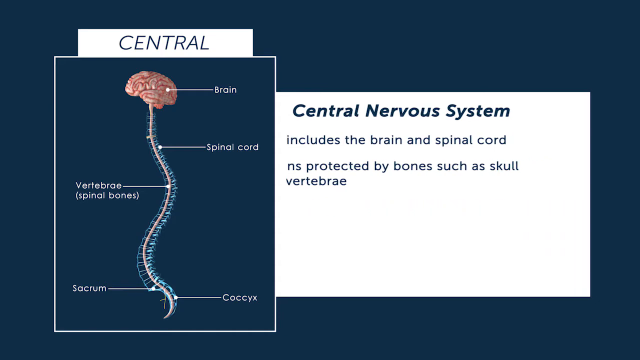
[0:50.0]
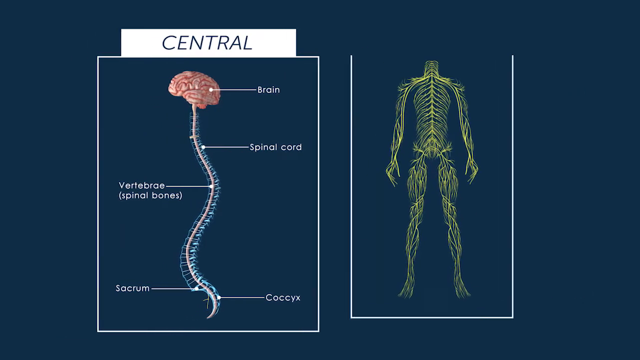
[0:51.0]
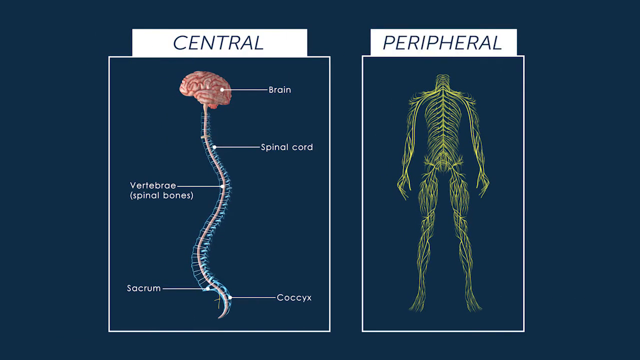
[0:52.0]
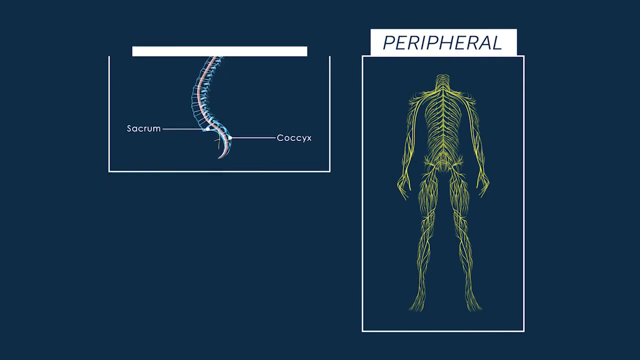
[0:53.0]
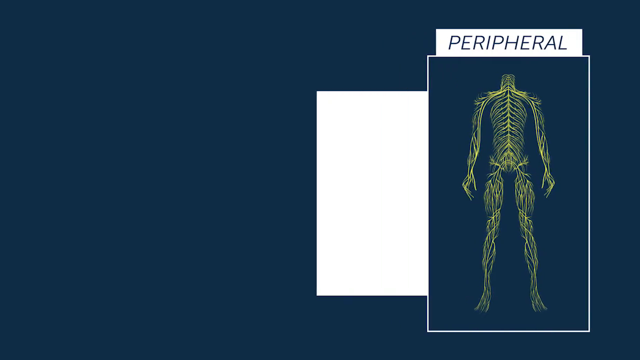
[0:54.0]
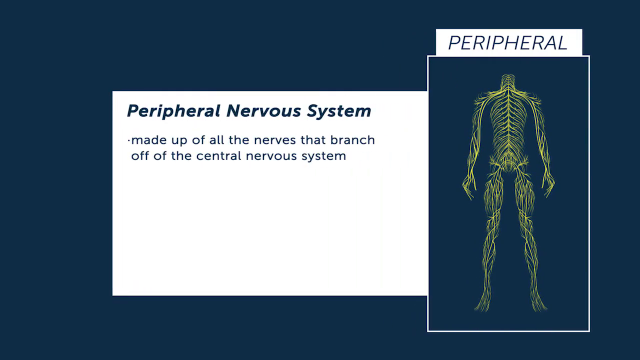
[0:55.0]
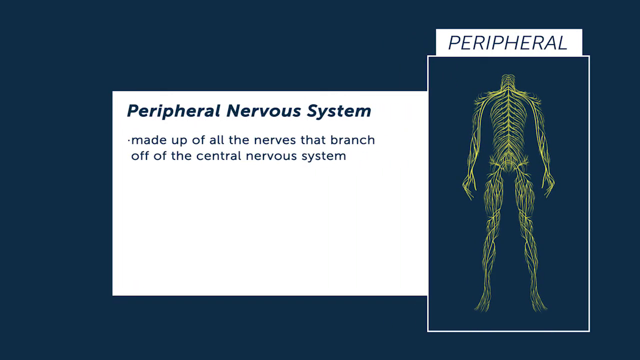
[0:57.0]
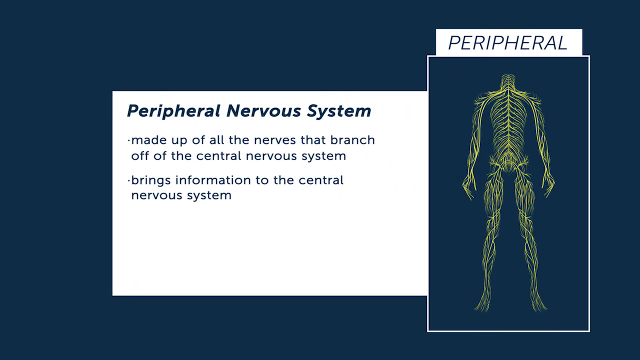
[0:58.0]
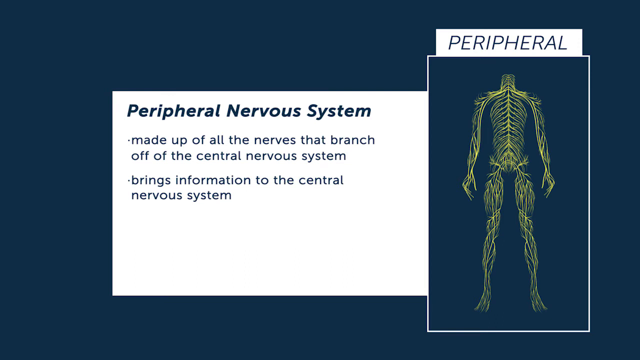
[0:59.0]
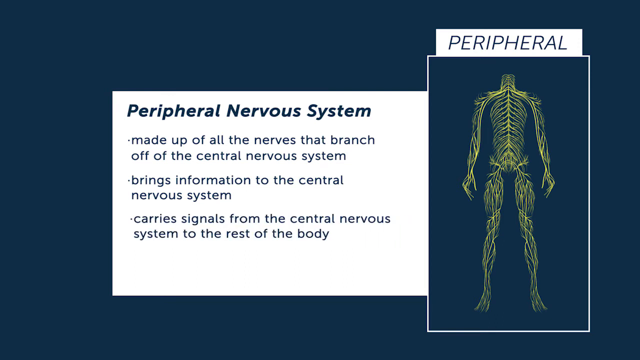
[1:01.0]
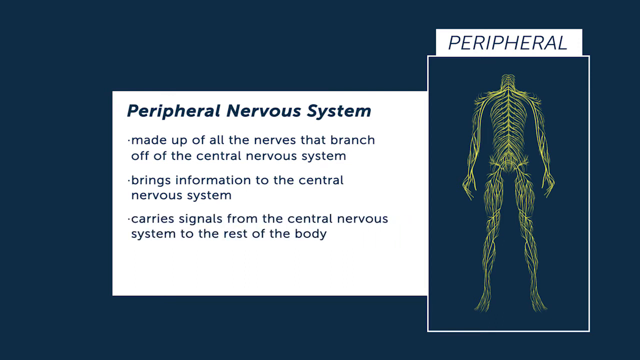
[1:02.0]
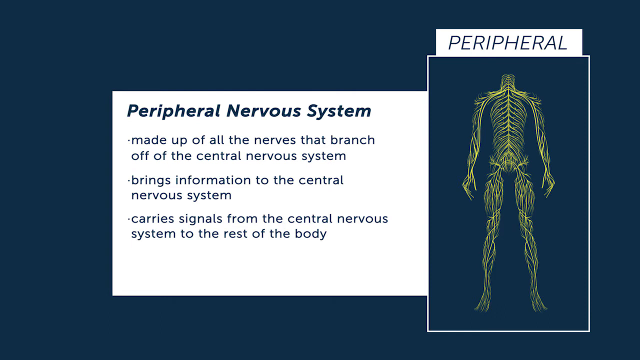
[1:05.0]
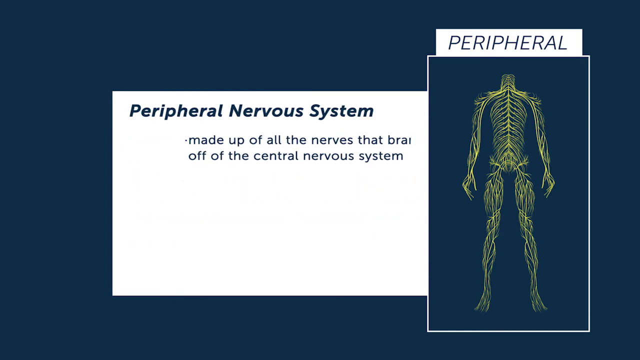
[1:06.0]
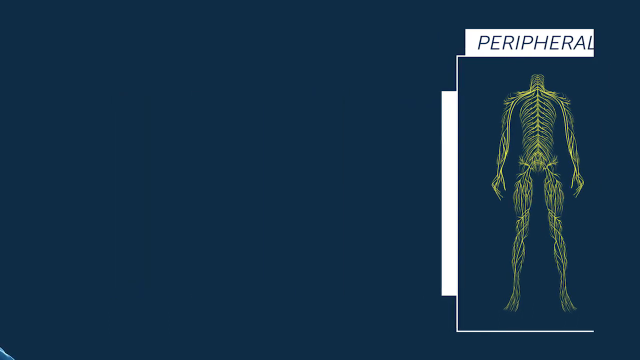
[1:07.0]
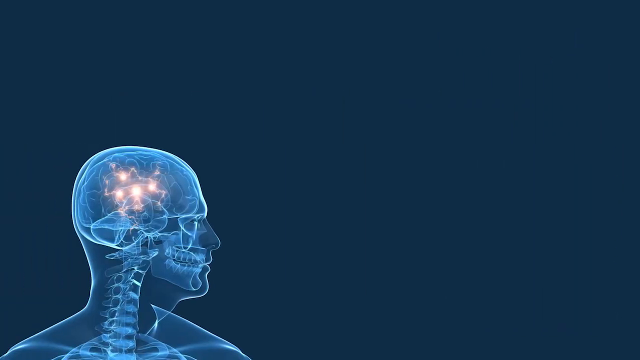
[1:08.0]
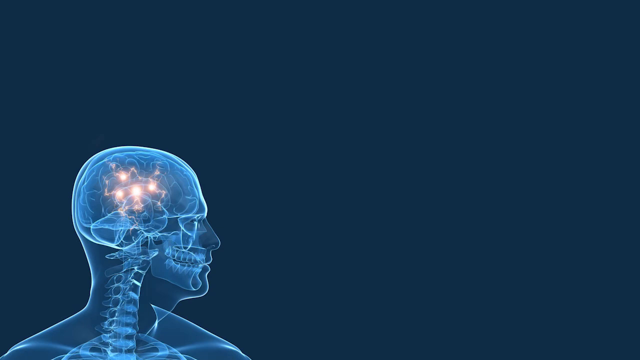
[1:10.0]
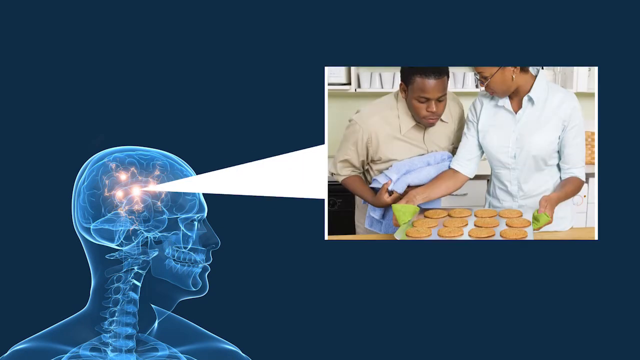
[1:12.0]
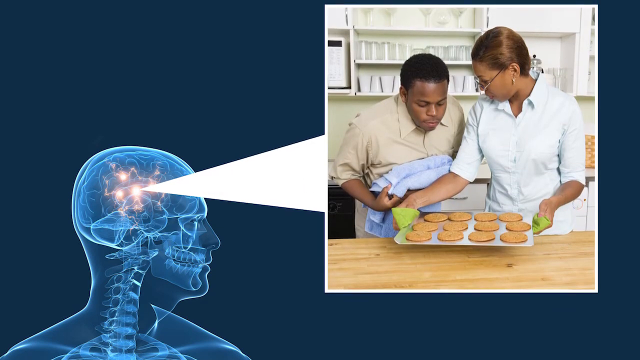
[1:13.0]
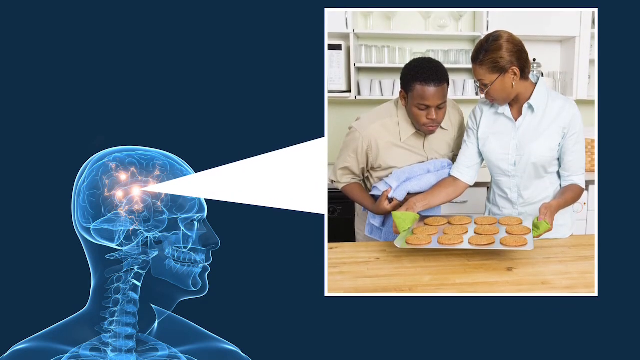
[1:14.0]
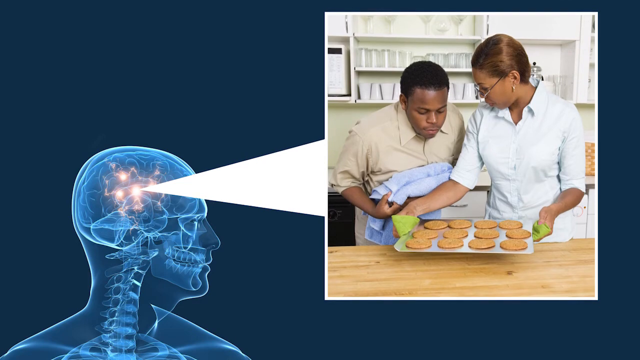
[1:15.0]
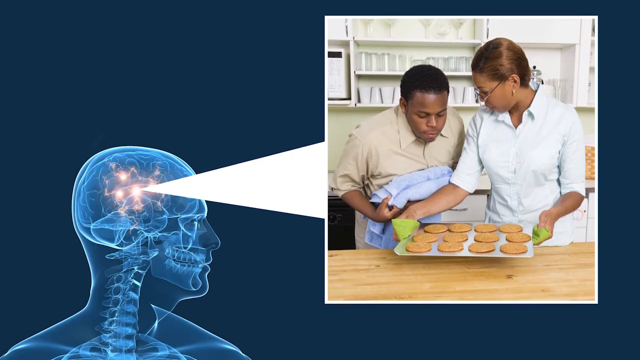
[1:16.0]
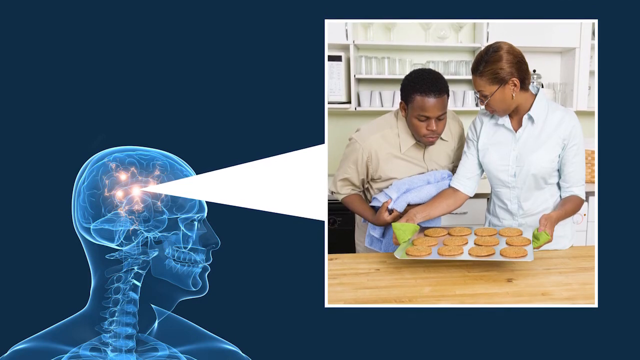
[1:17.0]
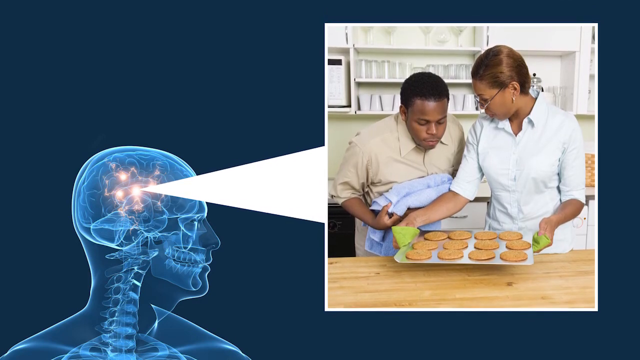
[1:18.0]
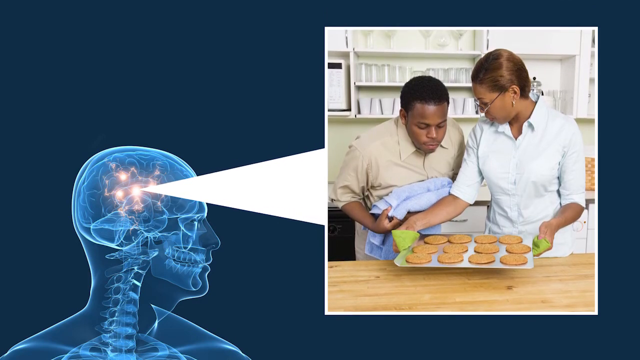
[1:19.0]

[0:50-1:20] A similar image appears, with the central box containing the brain and spinal cord on the left and the peripheral skeleton box on the right. The brain and spinal cord box disappears, leaving the peripheral box with the skeleton on the right, and a new white box appears on the left with "peripheral nervous system" in bold blue letters. Below it, in finer text, it reads "made up of all the nerves", continuing "branch off of the central nervous system". Another bullet point beneath says "brings information to the central nervous system", and a third says "carries signals from the central nervous system to the rest of the body". A new image follows with a blue background: in the bottom left corner is a sideways left view of a person's head, shown see-through so the brain, spinal cord and teeth are visible. A square speech bubble appears on the right, containing an image of a man on the left and a woman on the right. The woman is holding a tray of what look like freshly baked cookies.